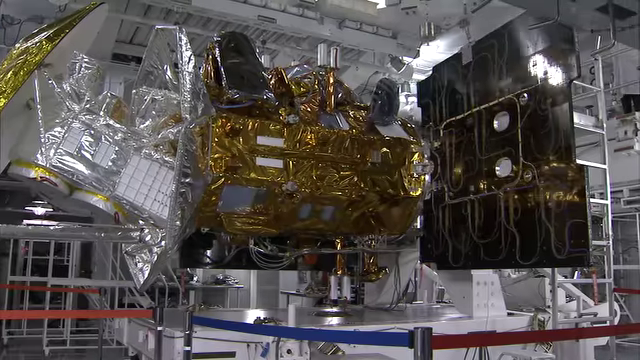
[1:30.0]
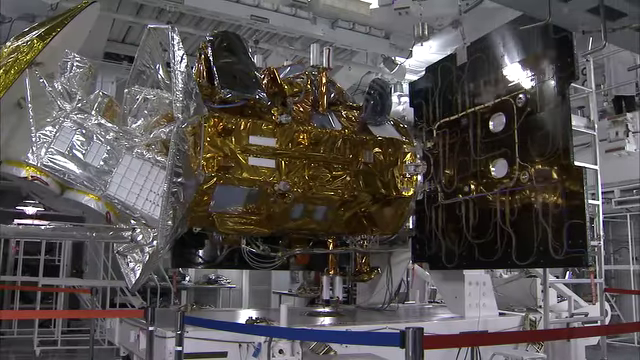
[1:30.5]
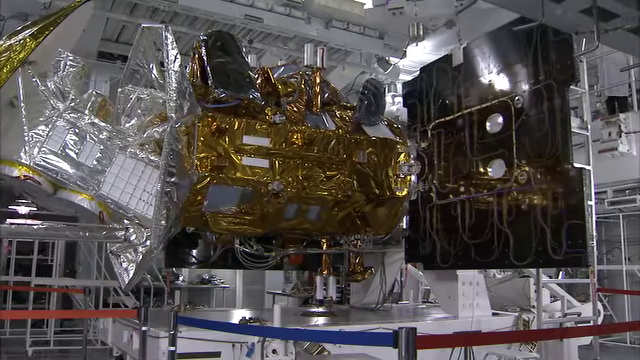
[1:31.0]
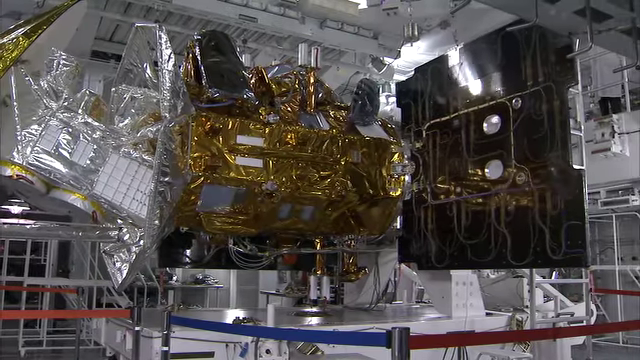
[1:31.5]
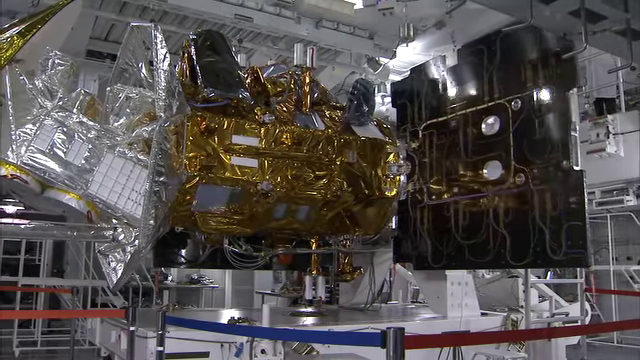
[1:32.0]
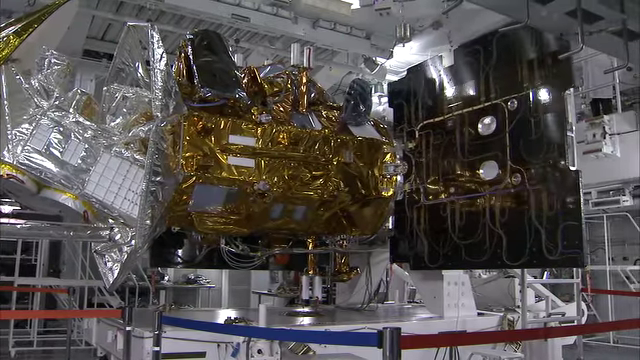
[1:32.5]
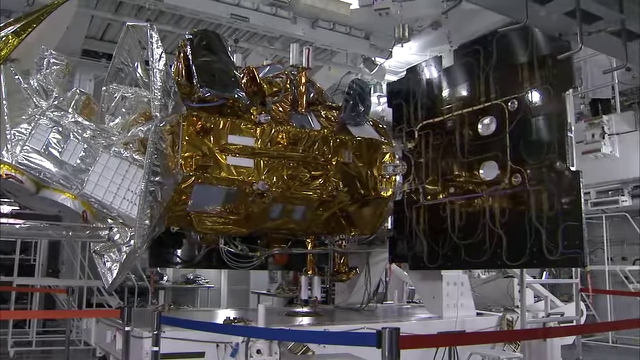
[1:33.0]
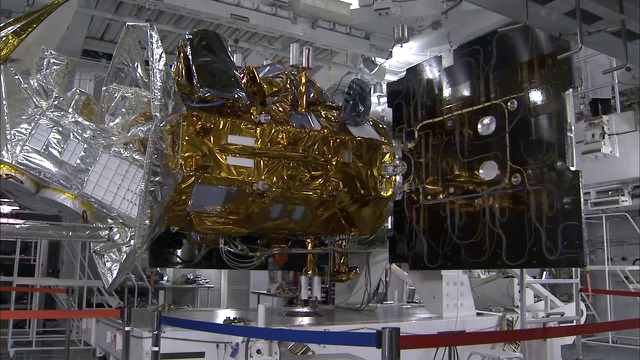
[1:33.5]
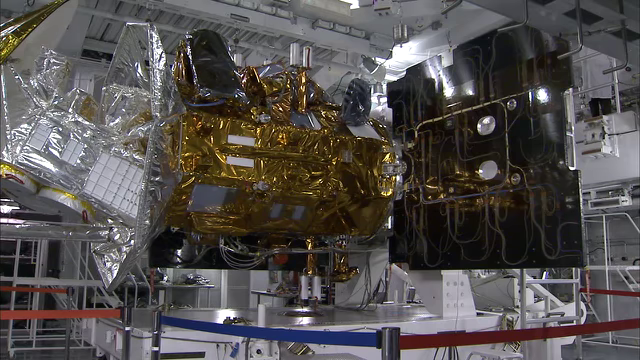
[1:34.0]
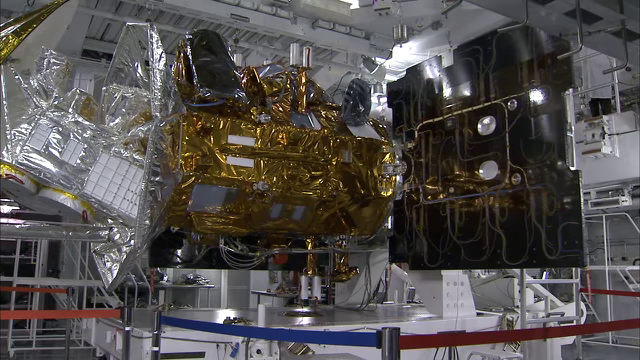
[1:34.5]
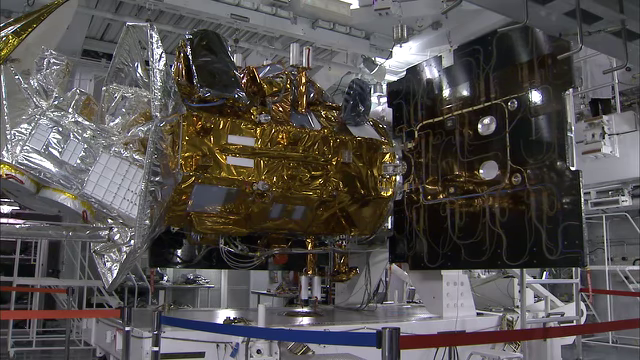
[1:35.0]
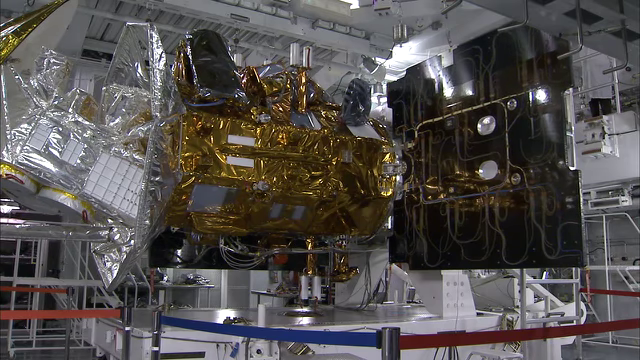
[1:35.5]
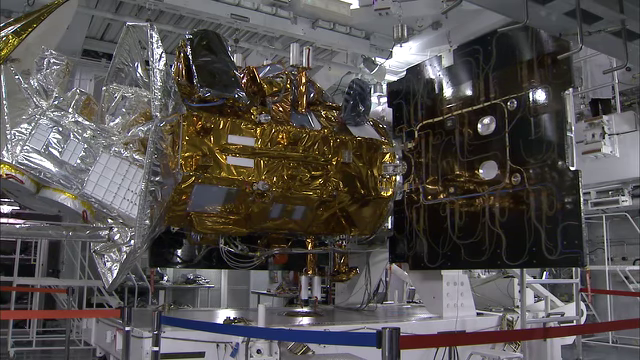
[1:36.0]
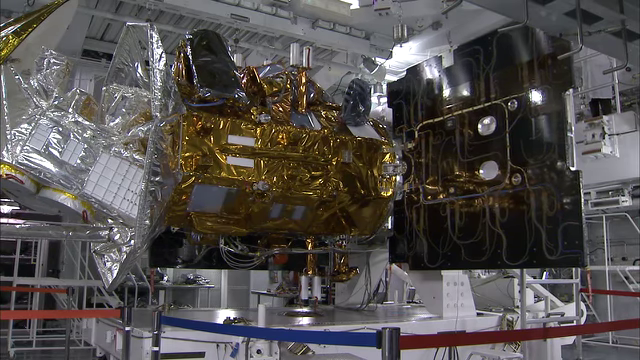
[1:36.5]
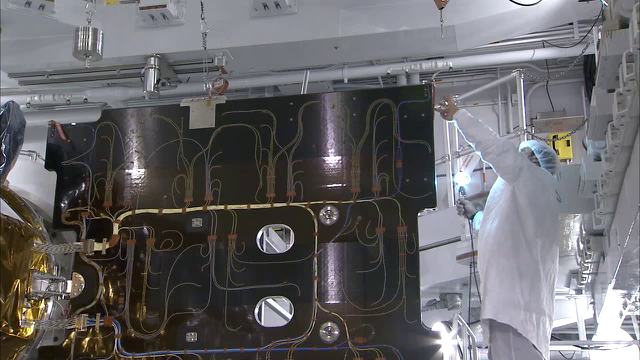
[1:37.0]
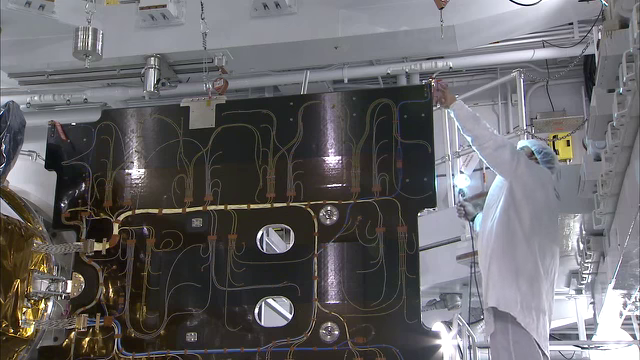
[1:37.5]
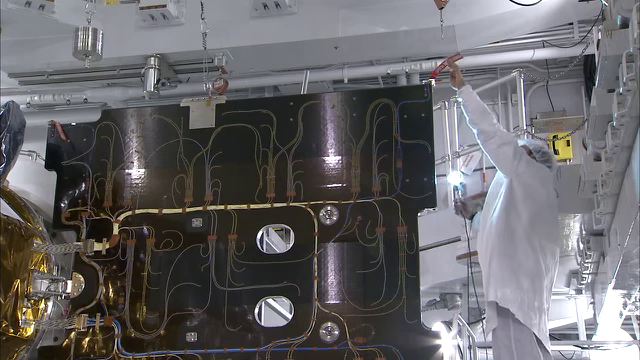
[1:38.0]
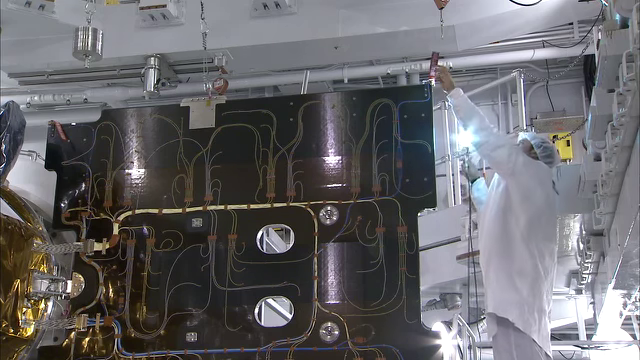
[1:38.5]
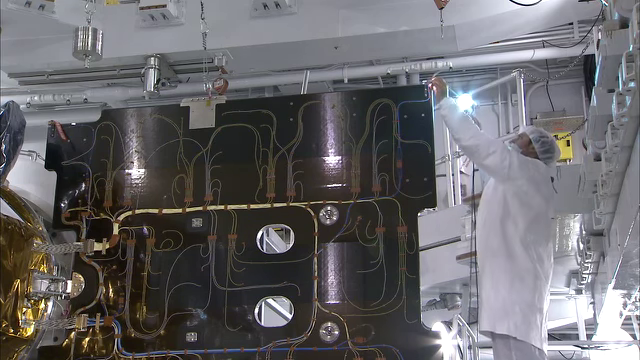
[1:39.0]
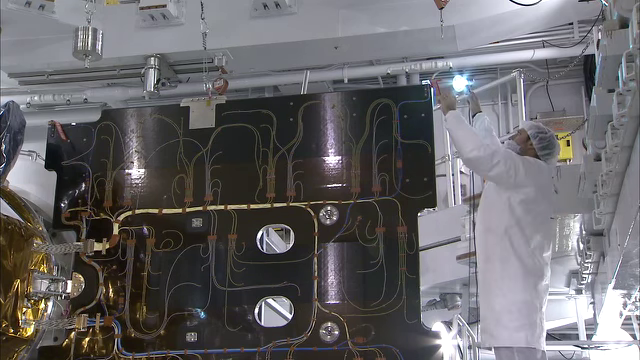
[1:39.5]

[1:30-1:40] Some kind of black panel, possibly a solar panel, has been connected to the side and now extends out almost like a wing. A technician with a flashlight inspects it, touches something red, and keeps using the flashlight. The panel moves back and forth a little as he touches it, apparently checking that everything is as it should be.